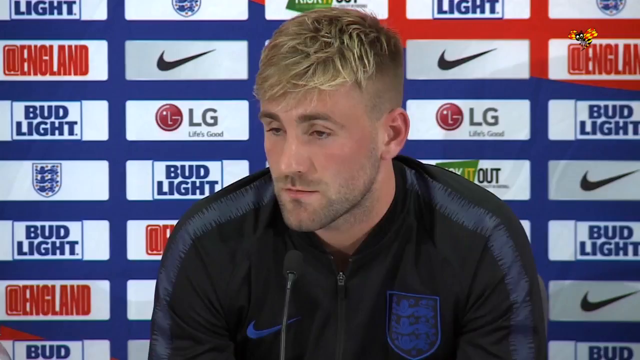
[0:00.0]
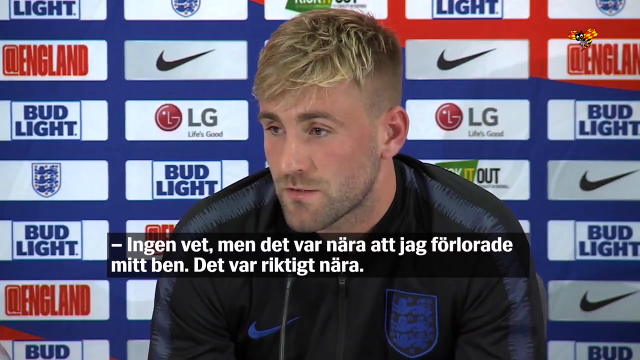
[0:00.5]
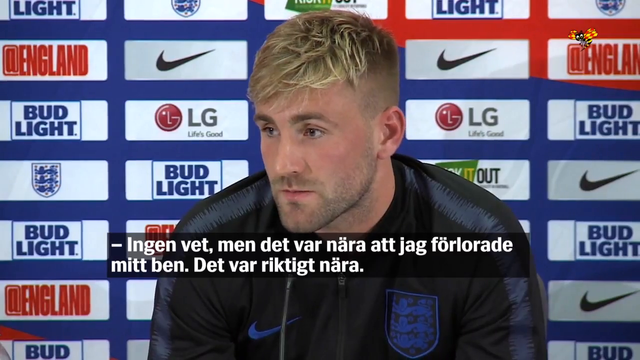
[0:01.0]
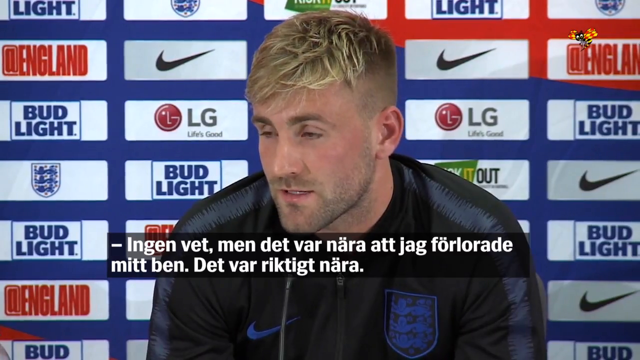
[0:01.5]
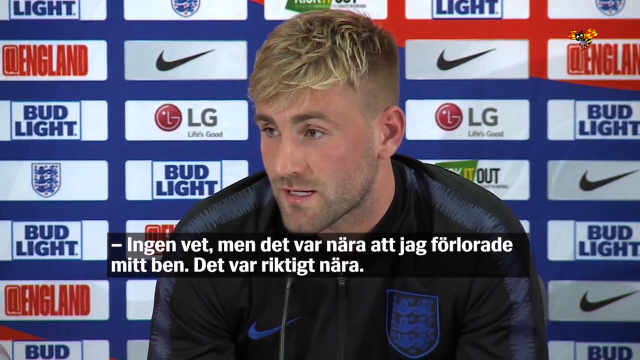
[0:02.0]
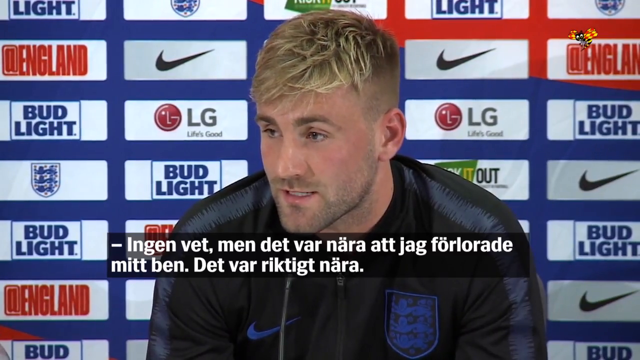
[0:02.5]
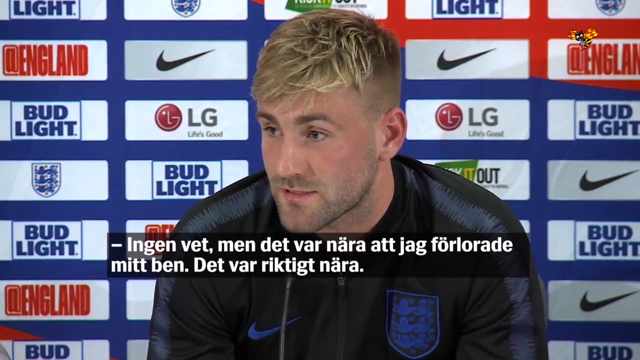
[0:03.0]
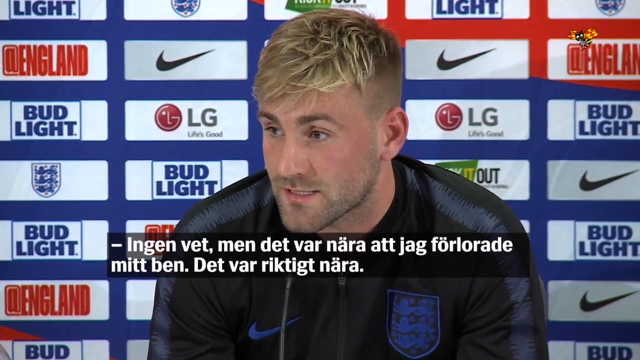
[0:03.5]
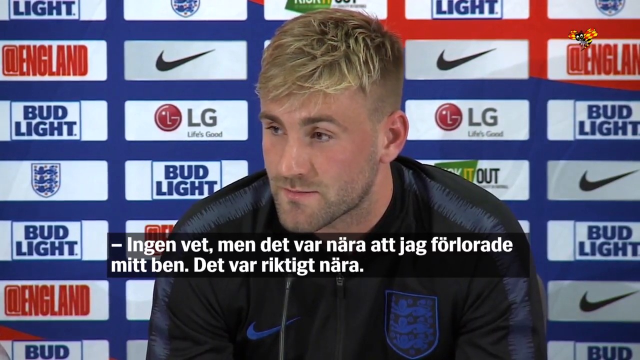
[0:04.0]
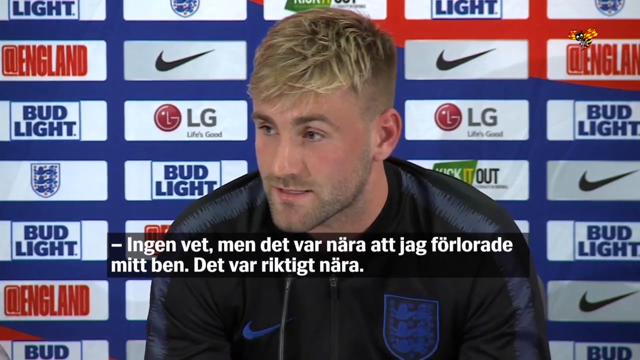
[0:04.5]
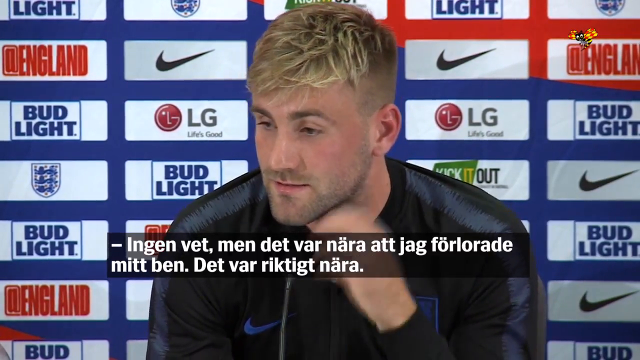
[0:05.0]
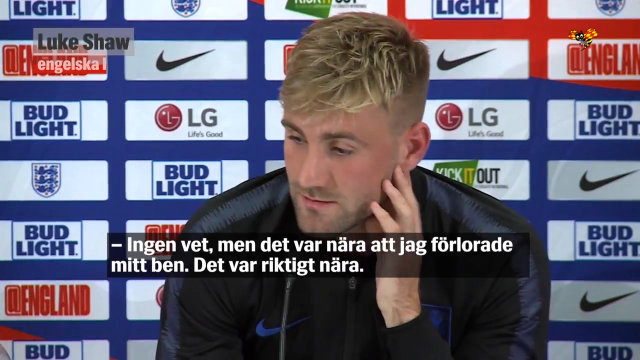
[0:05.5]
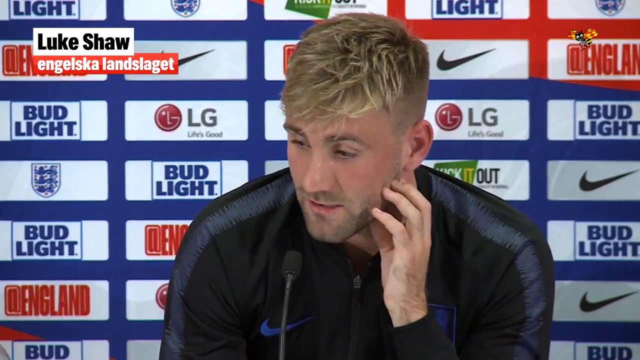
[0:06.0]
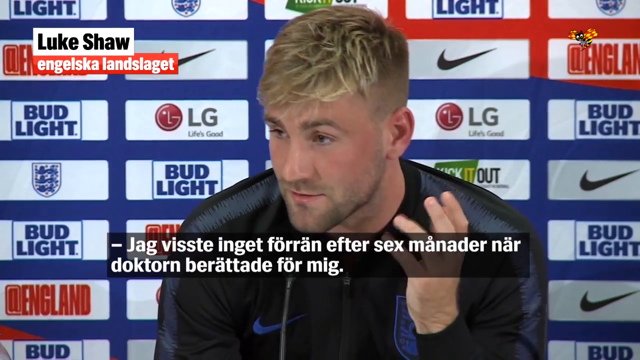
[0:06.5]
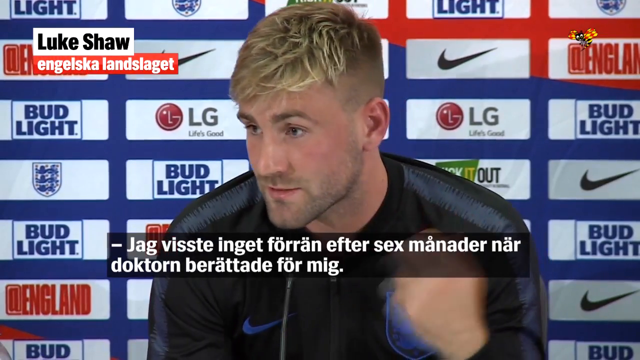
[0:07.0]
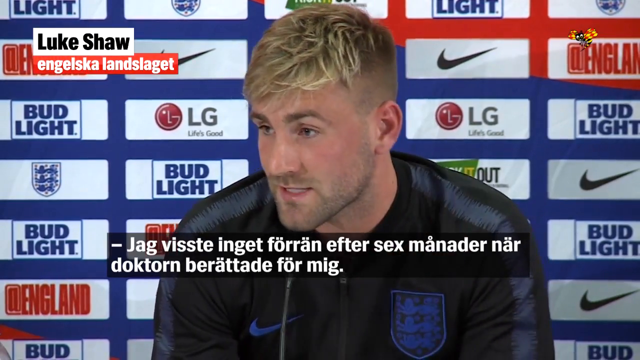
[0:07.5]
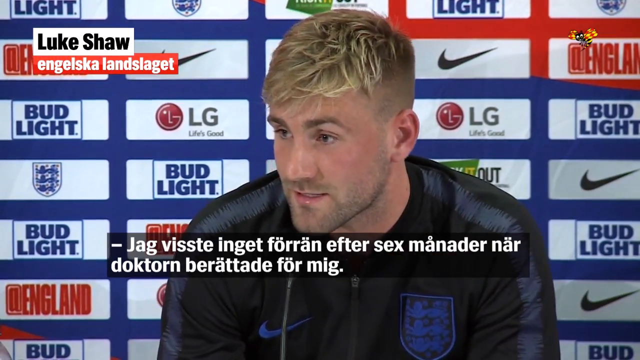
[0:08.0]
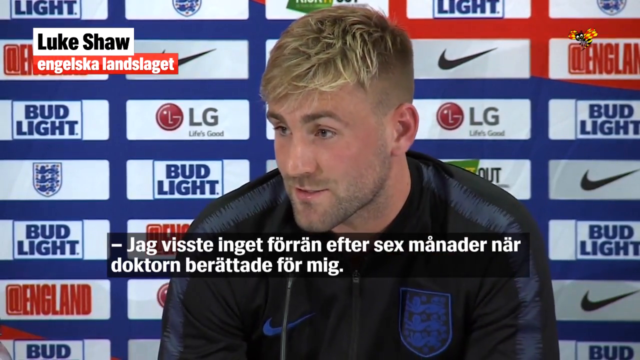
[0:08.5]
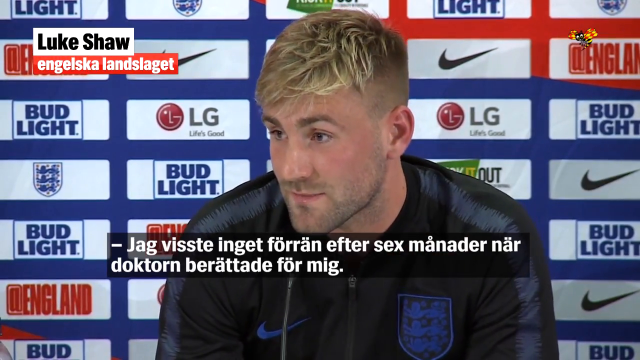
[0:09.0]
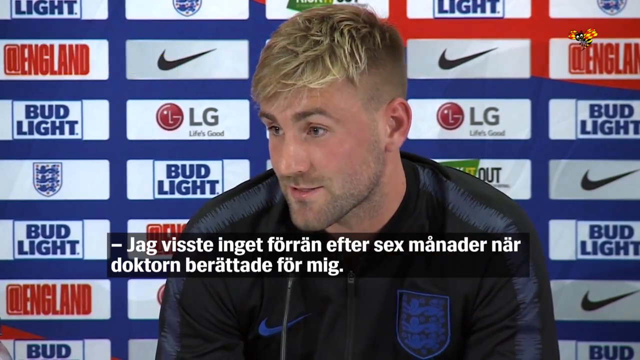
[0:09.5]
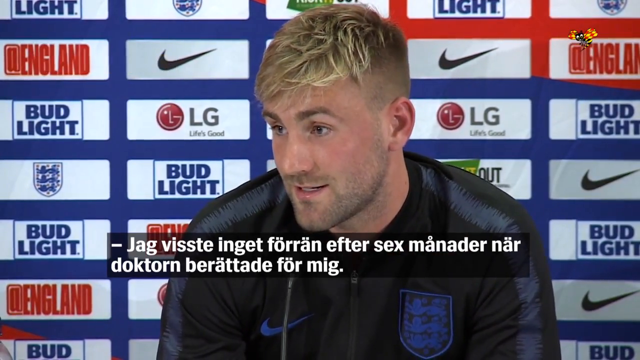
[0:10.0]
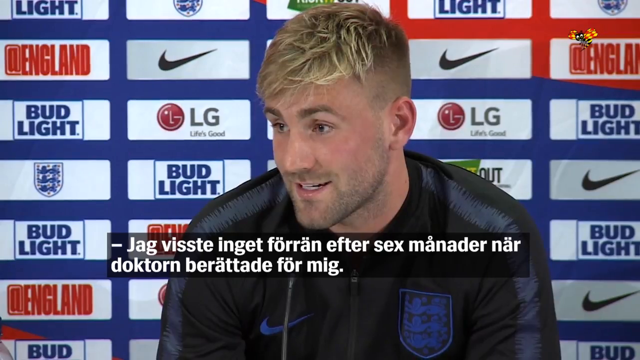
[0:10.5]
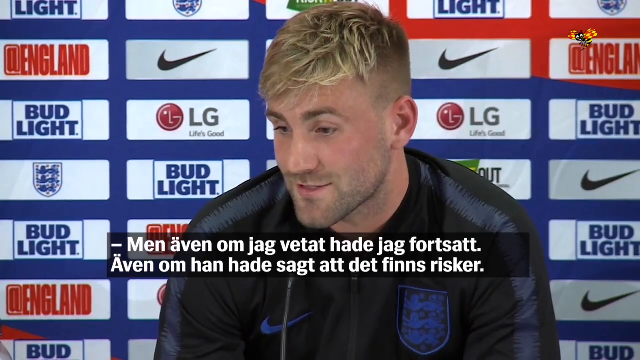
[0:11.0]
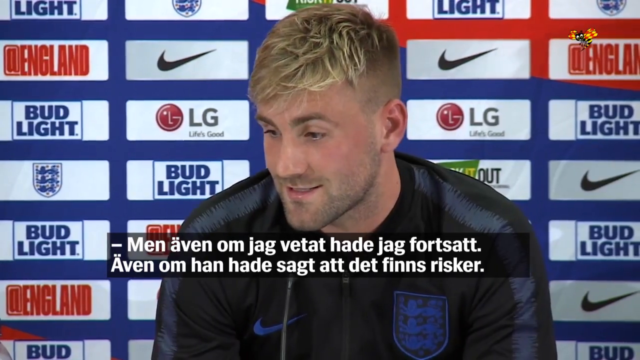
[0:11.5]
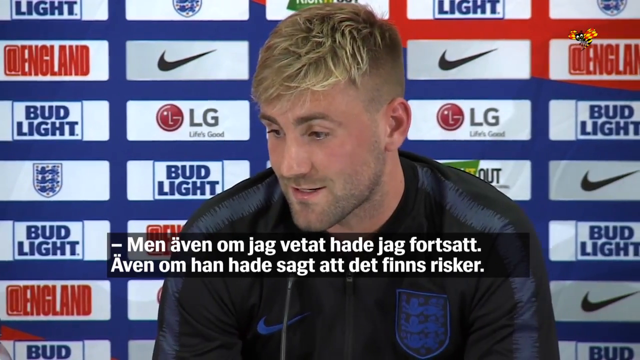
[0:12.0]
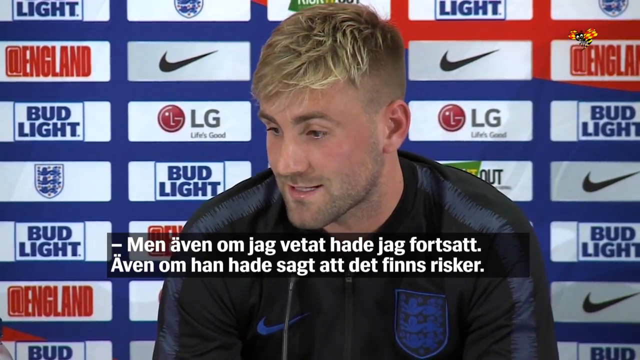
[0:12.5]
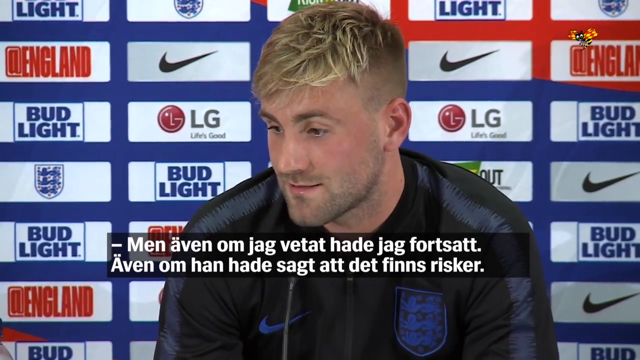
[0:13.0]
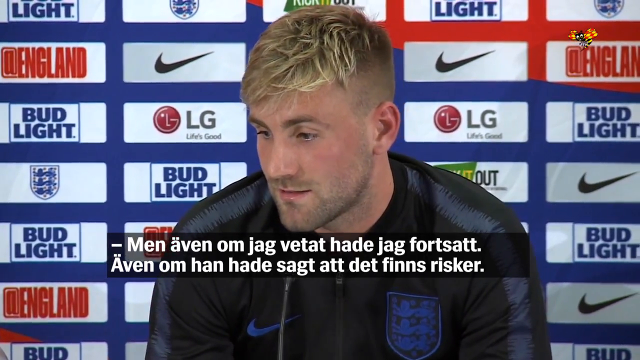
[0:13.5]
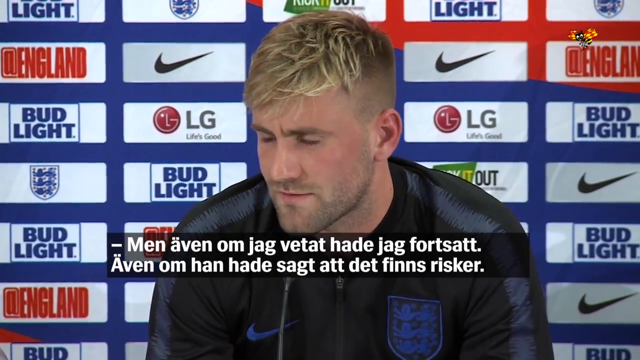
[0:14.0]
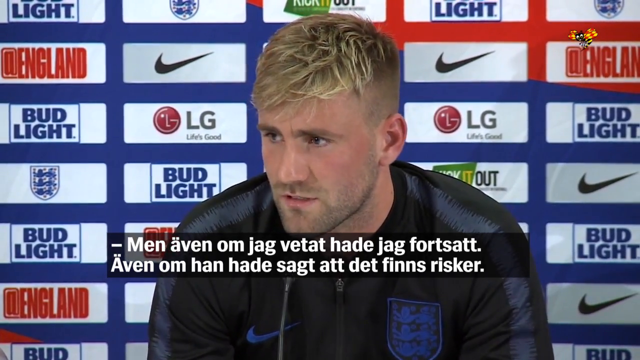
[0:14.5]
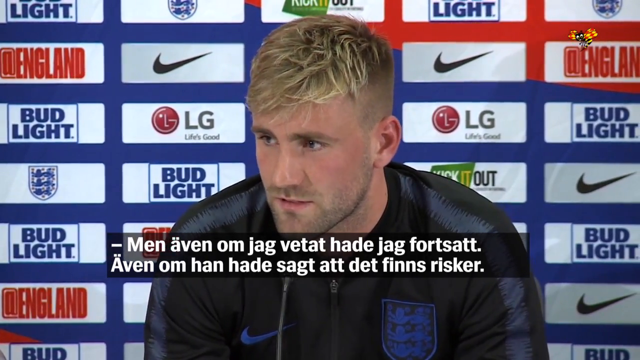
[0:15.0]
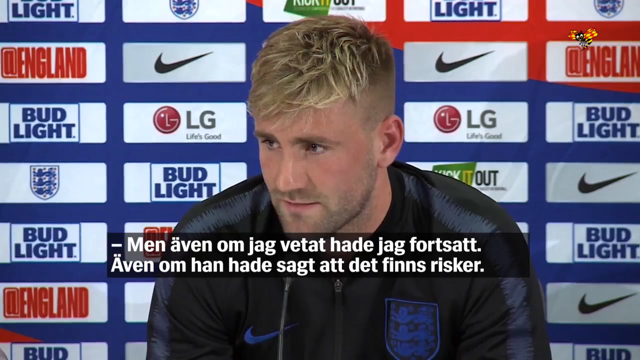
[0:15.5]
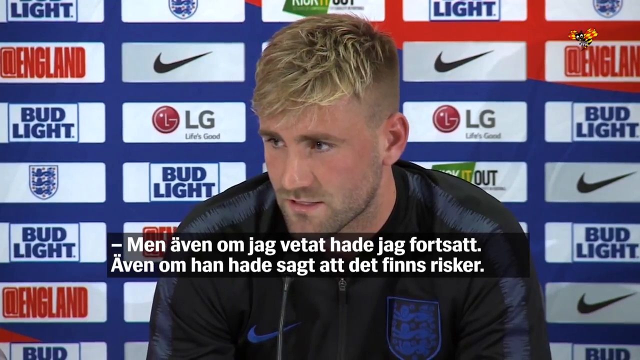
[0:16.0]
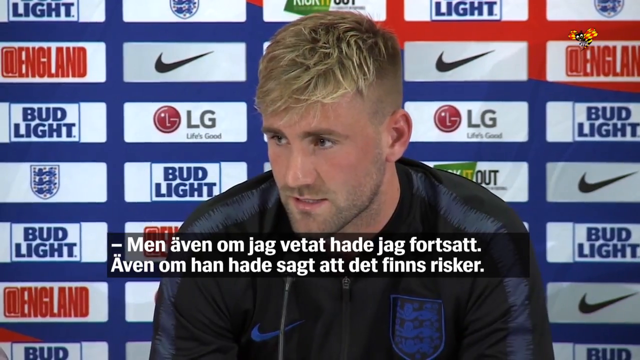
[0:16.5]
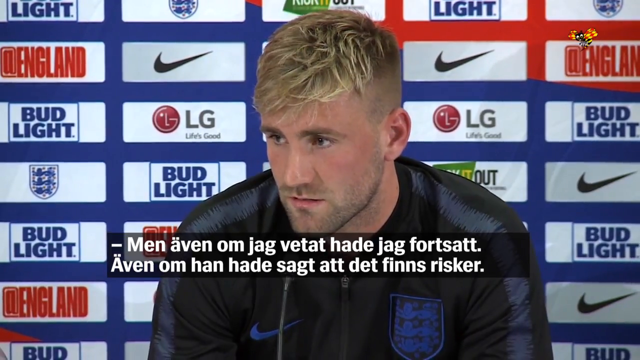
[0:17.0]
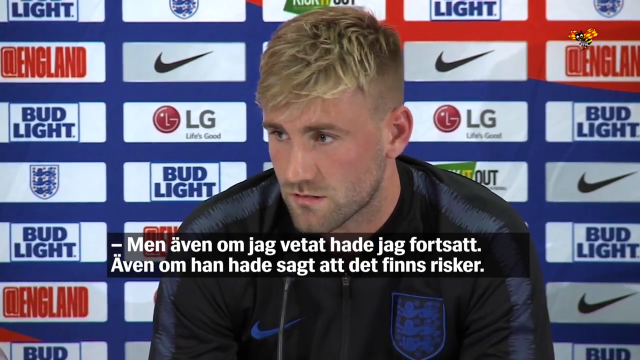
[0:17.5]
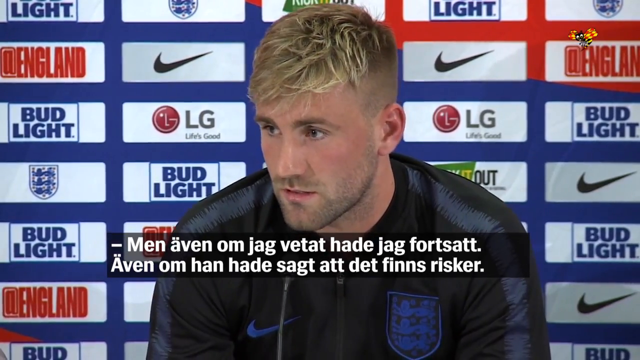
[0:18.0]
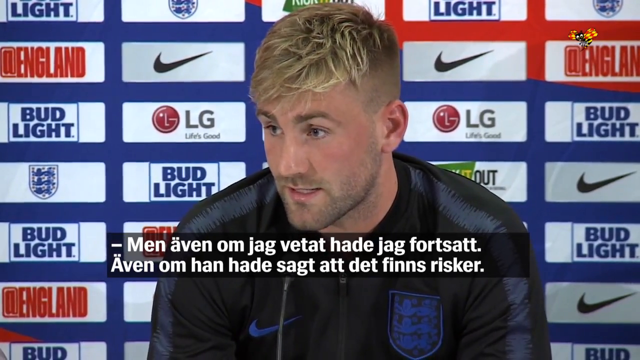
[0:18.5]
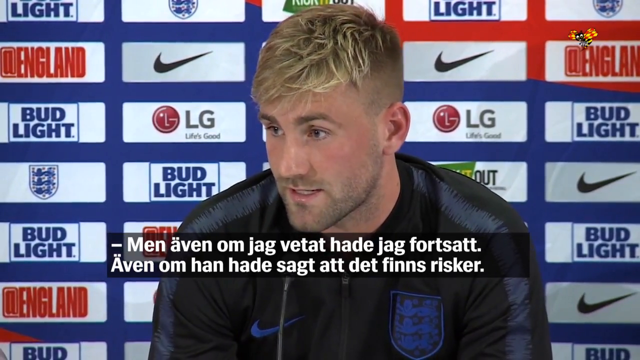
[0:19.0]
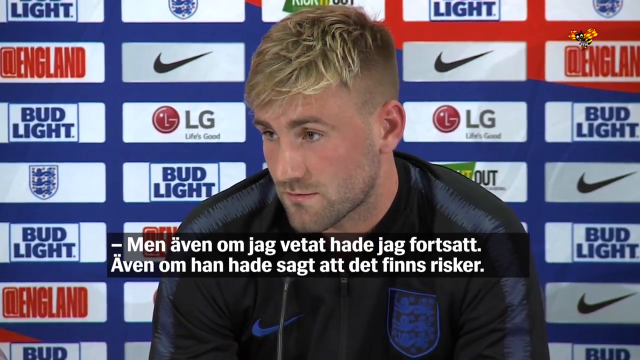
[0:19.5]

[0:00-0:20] A man with blonde, straight hair appears in front of many billboards and sponsor logos, including Nike, LG and Bud Light, and the word "England" is visible in the background. He appears to be speaking, and subtitles appear in a language other than English. His name, "Luke Shaw," appears in the upper left of the frame. He appears to be wearing the England team logo, and a Nike logo is visible on his shirt. He is clearly a sports player in the middle of an interview of some sort; the subtitles are possibly a translation for fans in another country.